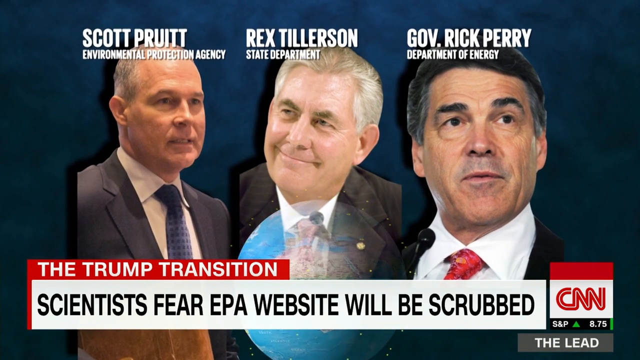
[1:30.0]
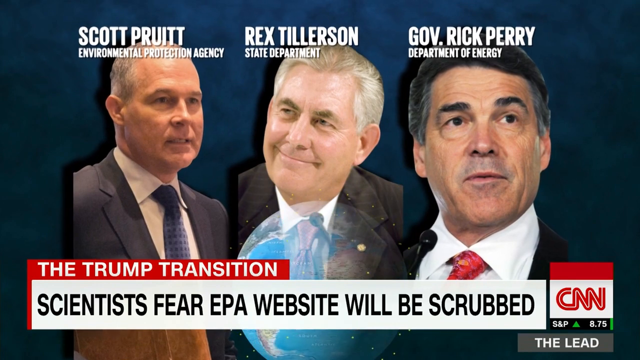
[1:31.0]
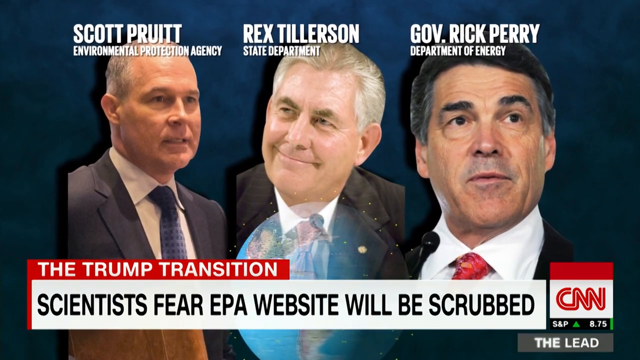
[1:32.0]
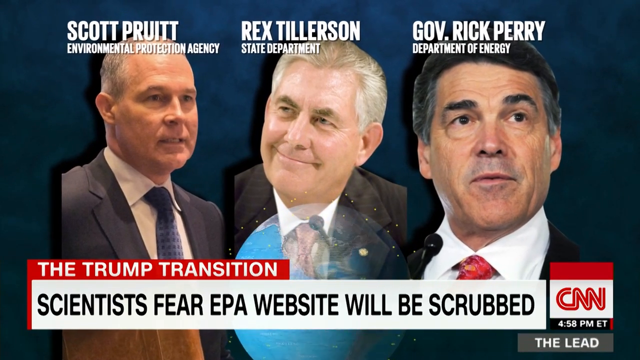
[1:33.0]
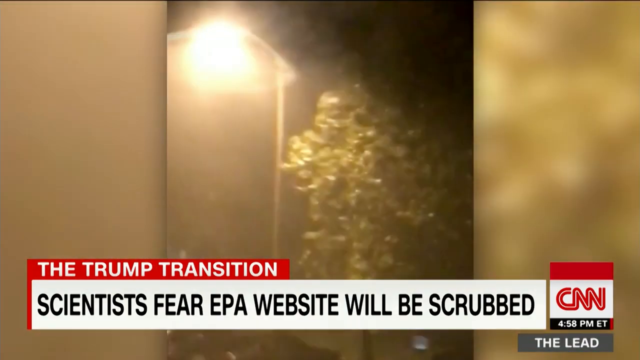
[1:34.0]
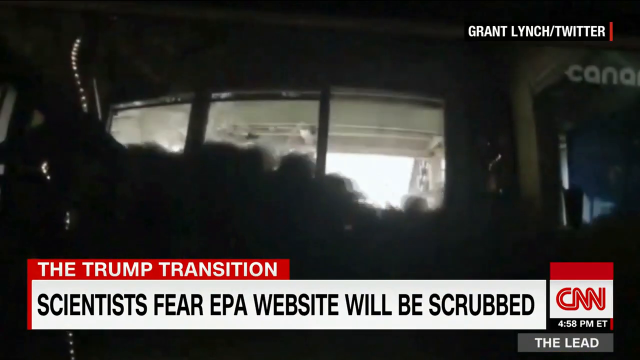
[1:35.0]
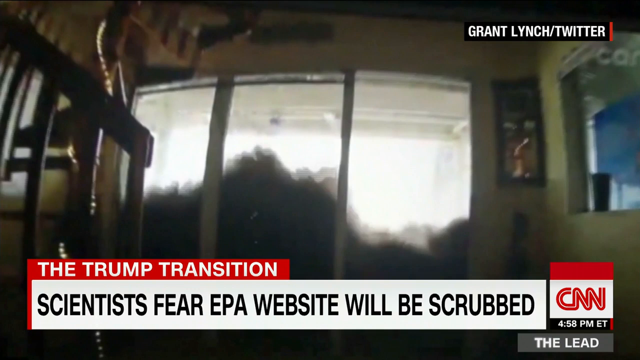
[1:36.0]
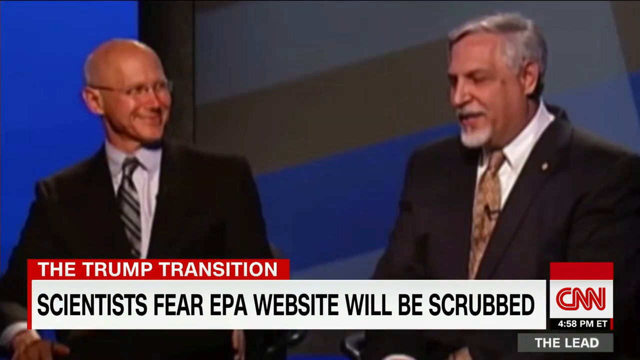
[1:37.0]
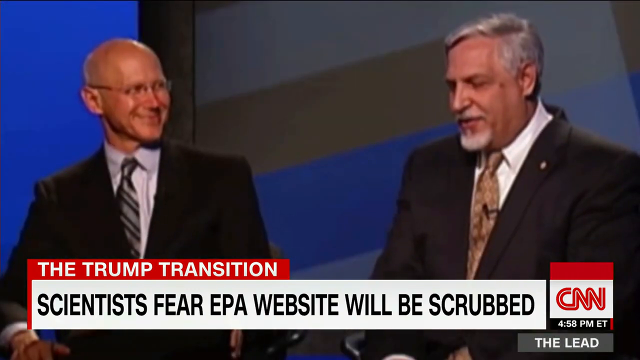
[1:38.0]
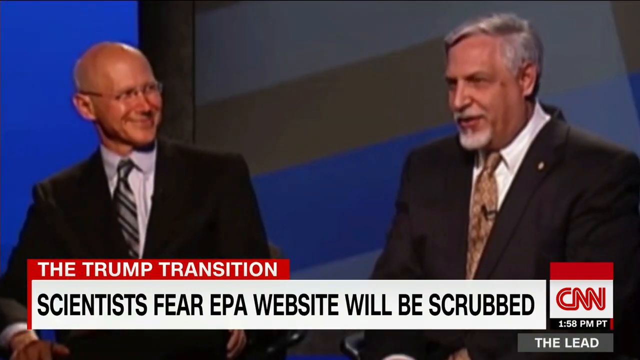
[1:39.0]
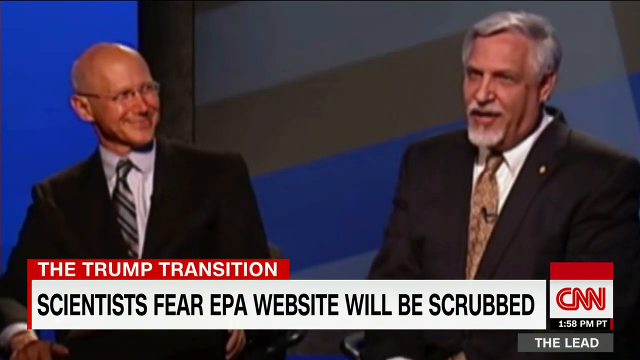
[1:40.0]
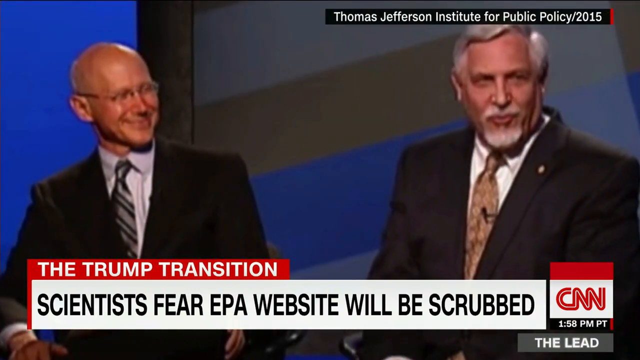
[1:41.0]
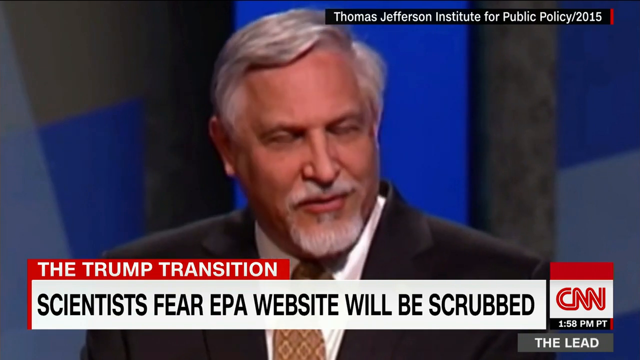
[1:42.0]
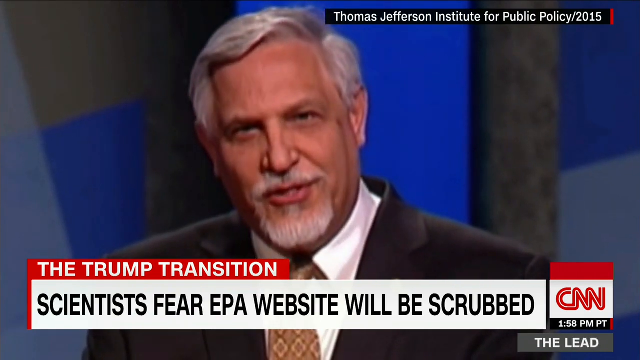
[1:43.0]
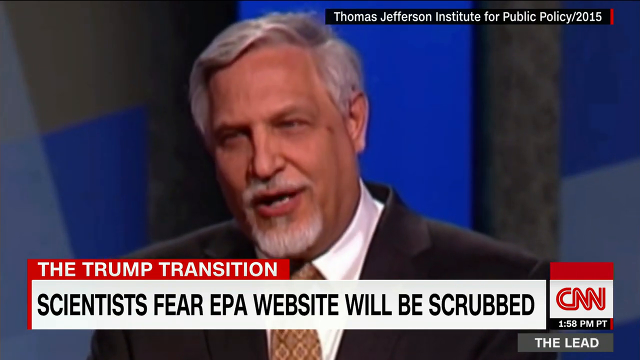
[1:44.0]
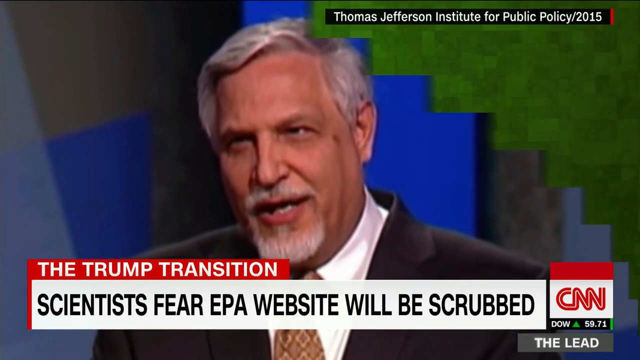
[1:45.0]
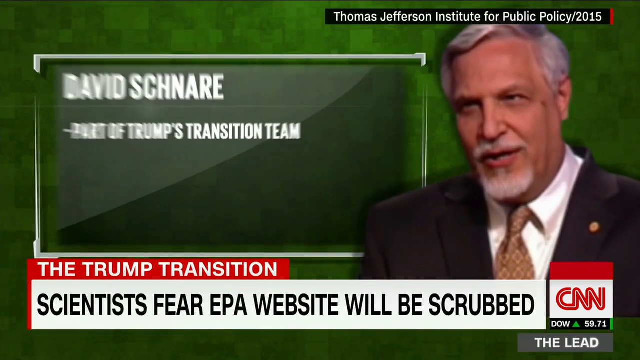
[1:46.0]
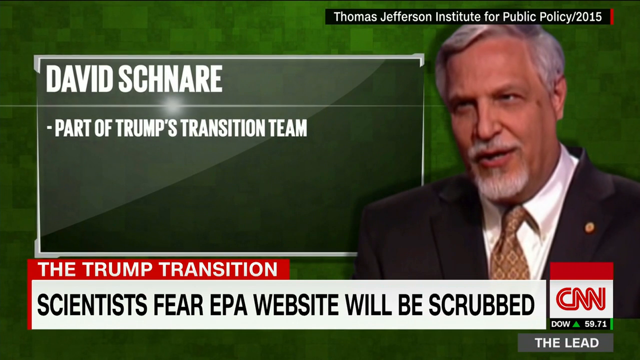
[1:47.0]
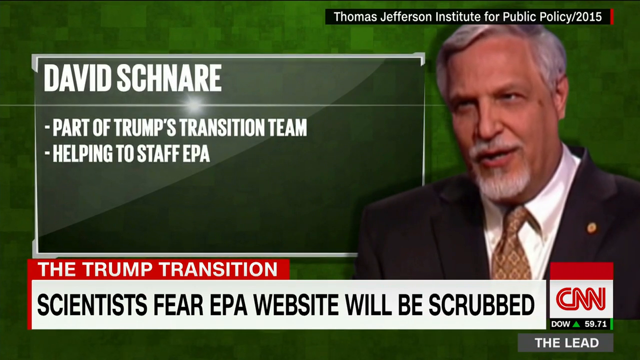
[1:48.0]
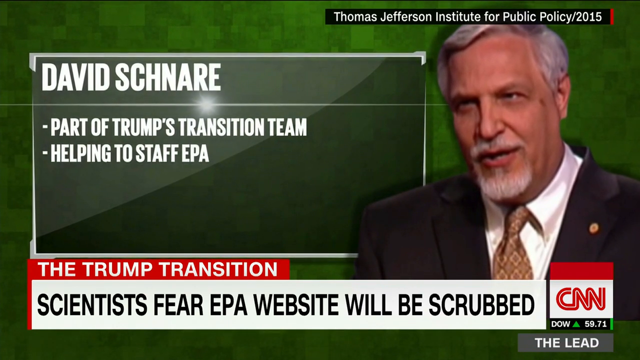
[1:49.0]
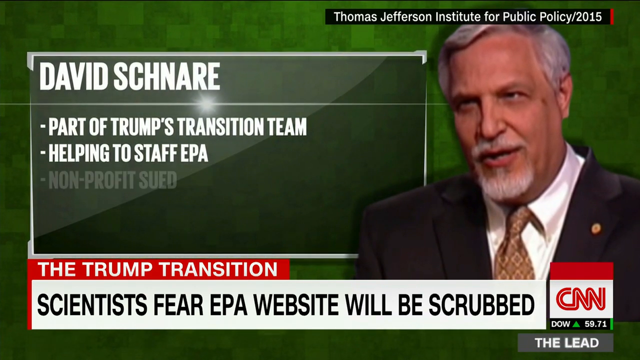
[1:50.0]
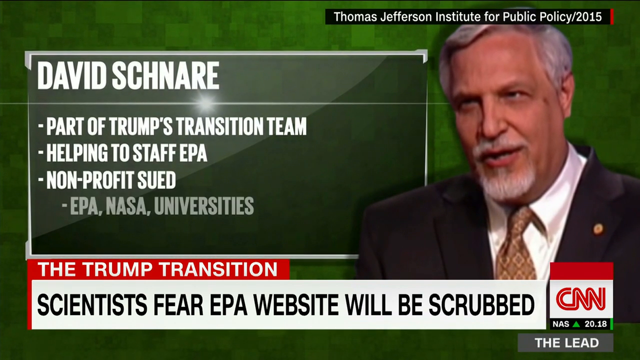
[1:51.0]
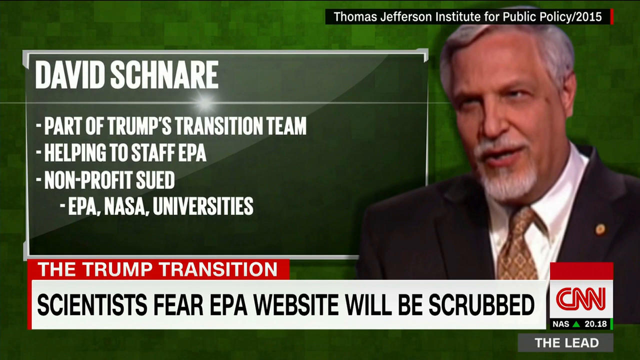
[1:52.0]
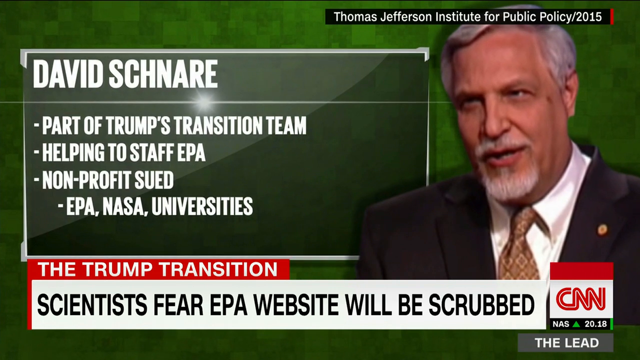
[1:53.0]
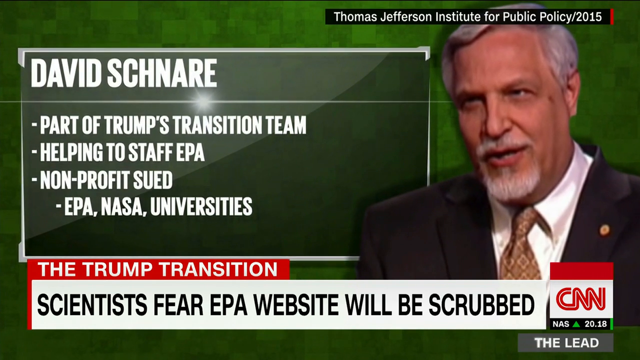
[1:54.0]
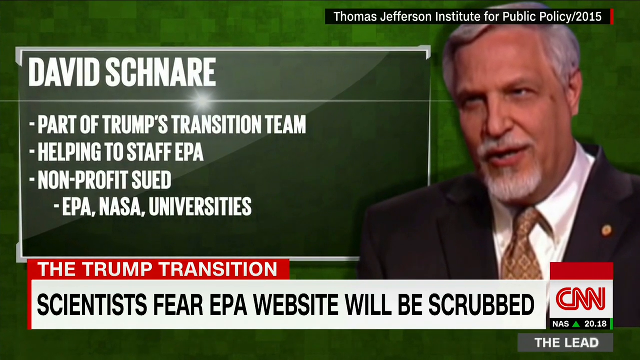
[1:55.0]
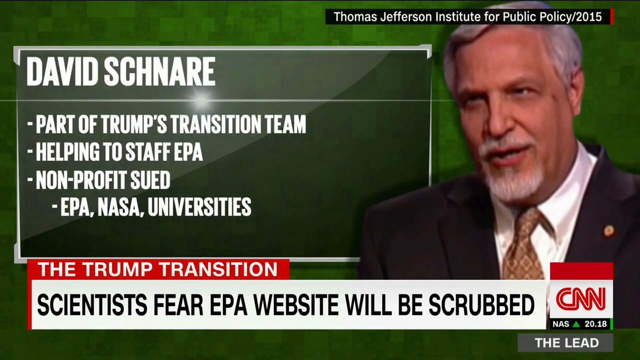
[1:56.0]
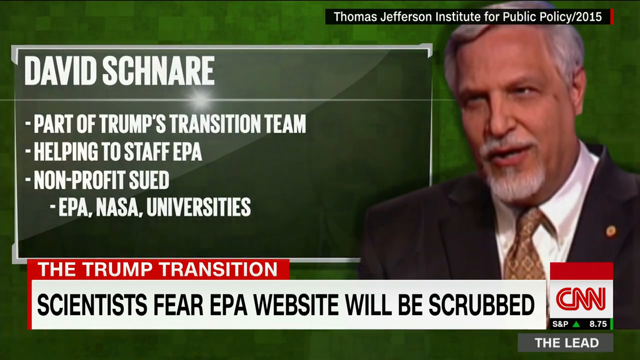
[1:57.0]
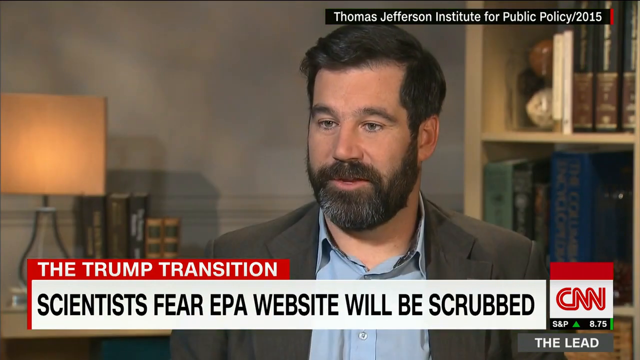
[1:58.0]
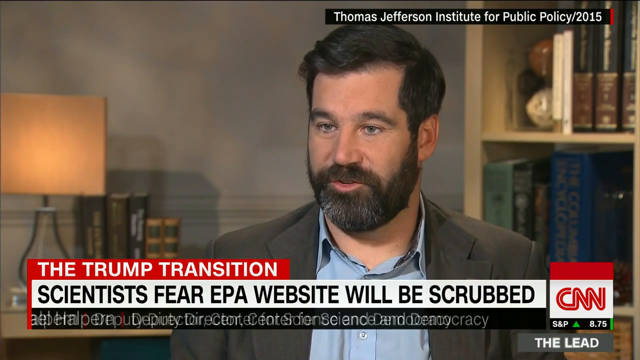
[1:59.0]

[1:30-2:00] Against a dark background, the globe spins with the images of Scott, Rex and Governor Rick Perry all lit up. Very short, quick images of different natural disasters follow: the hot sun, a hurricane, water rushing into a building; this footage is by Grant Litch of Twitter. Next, two men talk on some type of platform in a big space with a blue background featuring geometric designs. The one on the left is bald with glasses, and the one on the right has white hair and a white beard; both wear brown suits. A caption in the upper right corner reads "Thomas Jefferson Institute for Public Policy, 2015." The screen changes to an image of the bearded man who was just talking, with text identifying him as David Schnare, part of Trump's transition team, and bullet points reading "helping to stop the EPA, non-profit sued, EPA, NSA, universities." It then cuts back to Michael Halpern.